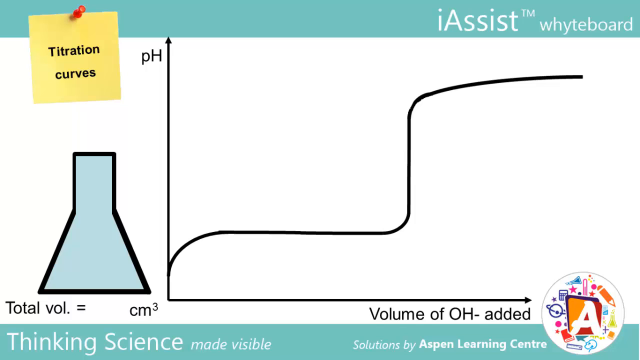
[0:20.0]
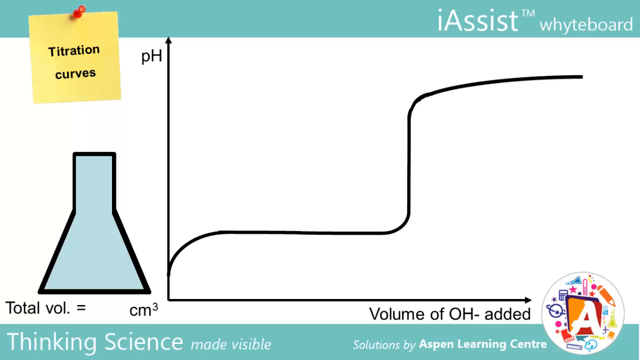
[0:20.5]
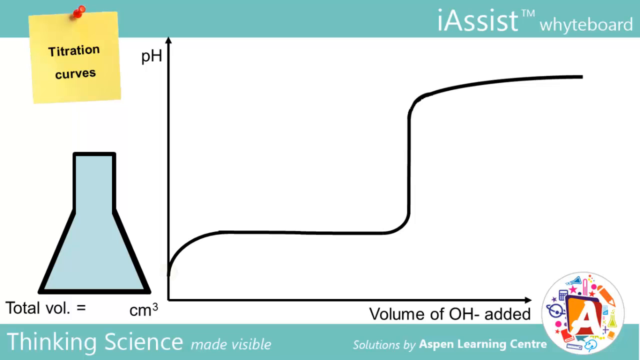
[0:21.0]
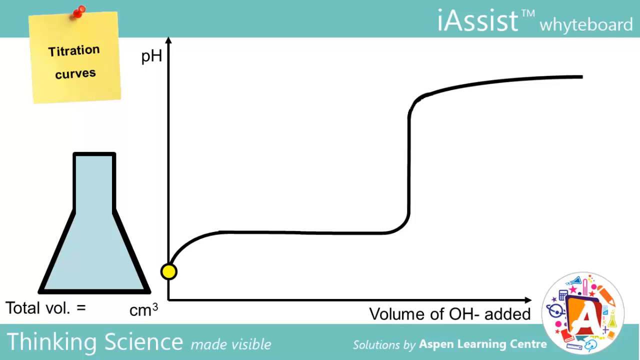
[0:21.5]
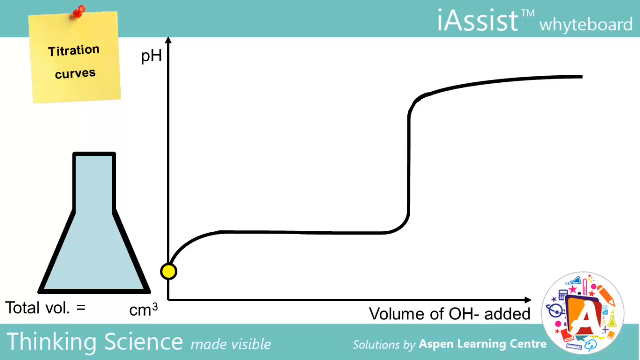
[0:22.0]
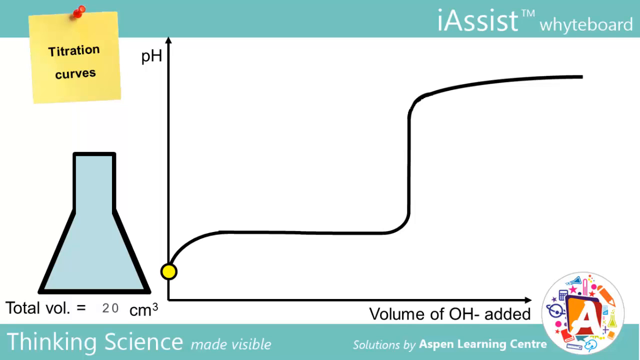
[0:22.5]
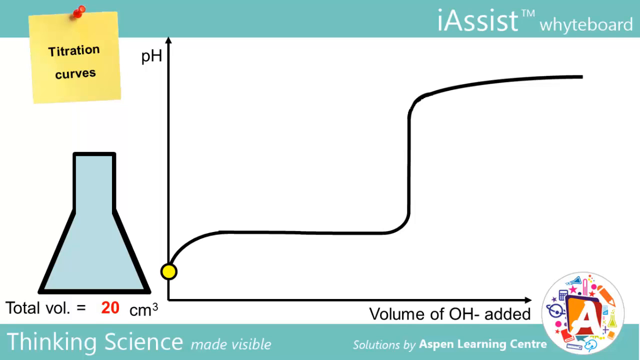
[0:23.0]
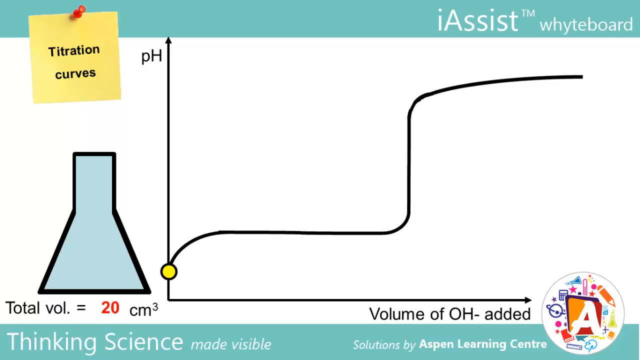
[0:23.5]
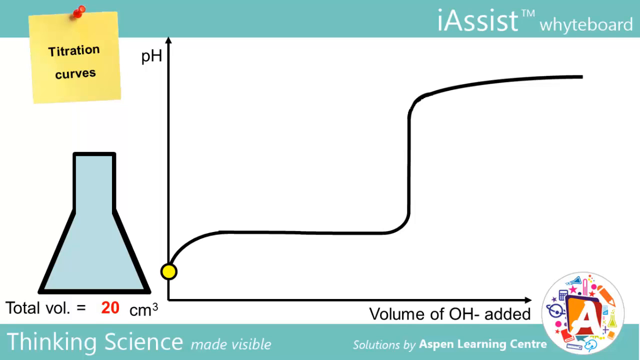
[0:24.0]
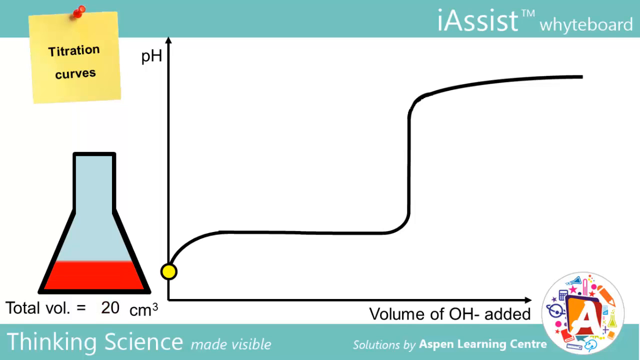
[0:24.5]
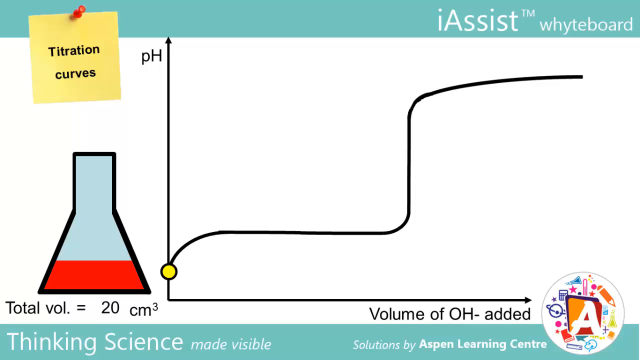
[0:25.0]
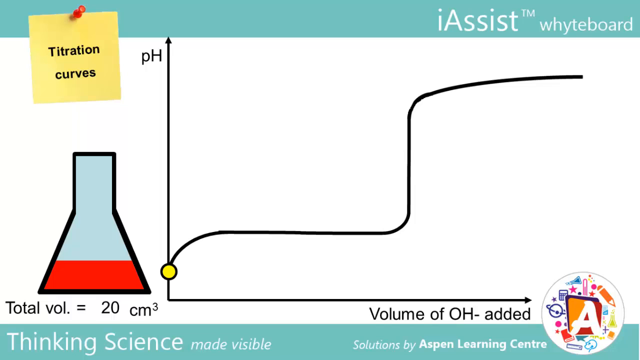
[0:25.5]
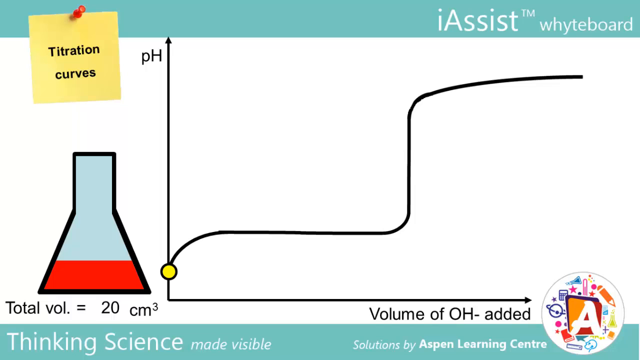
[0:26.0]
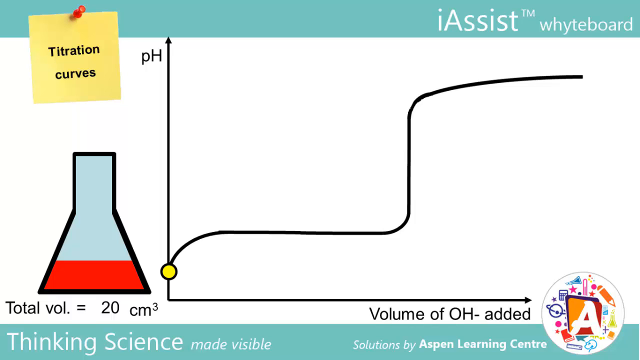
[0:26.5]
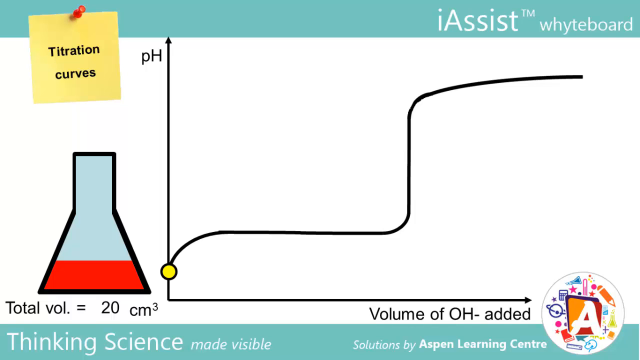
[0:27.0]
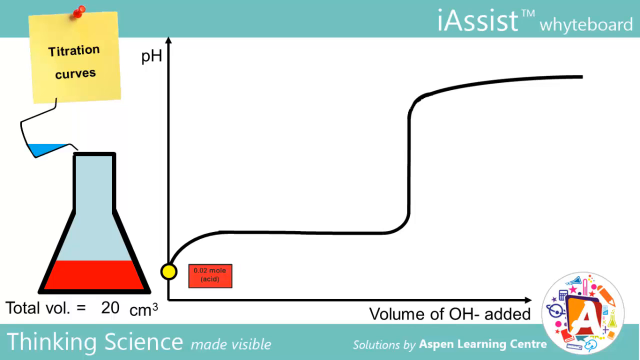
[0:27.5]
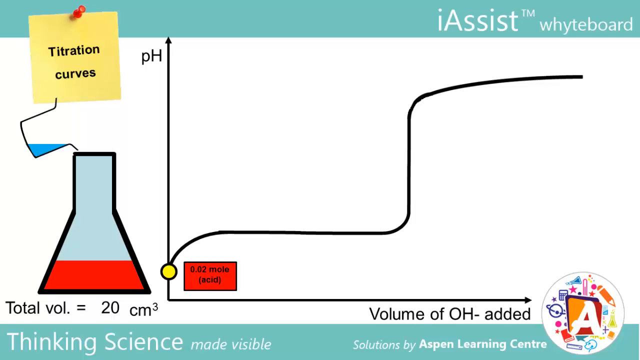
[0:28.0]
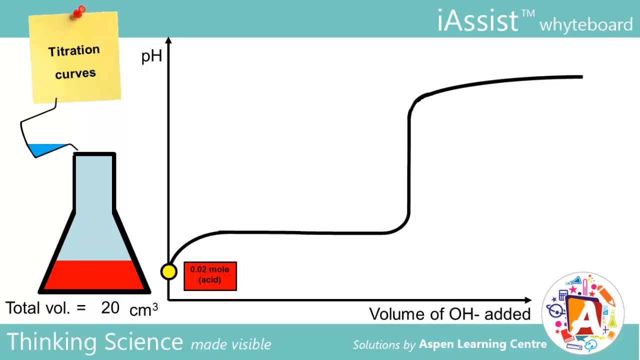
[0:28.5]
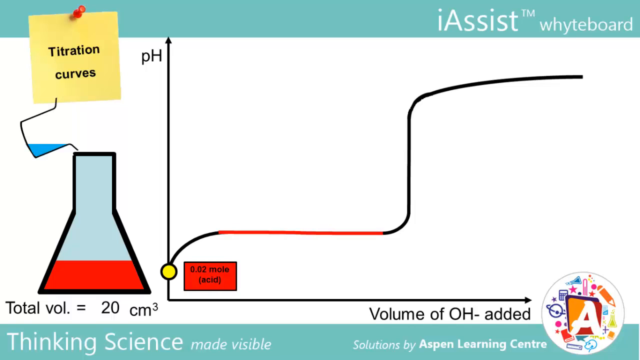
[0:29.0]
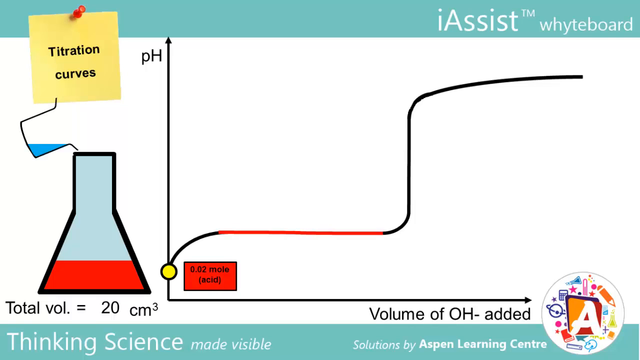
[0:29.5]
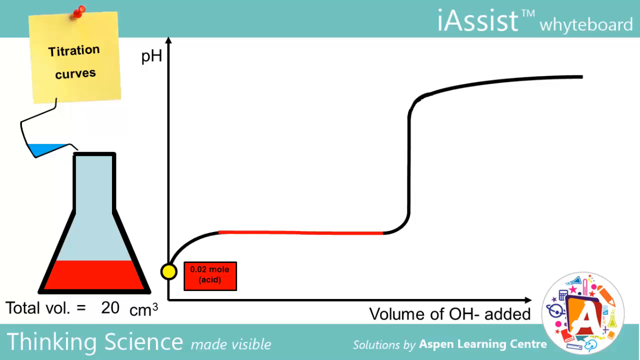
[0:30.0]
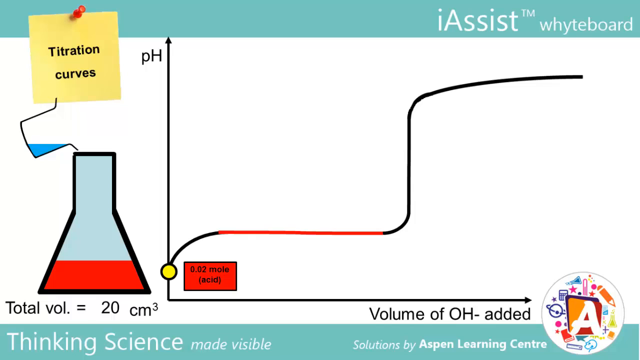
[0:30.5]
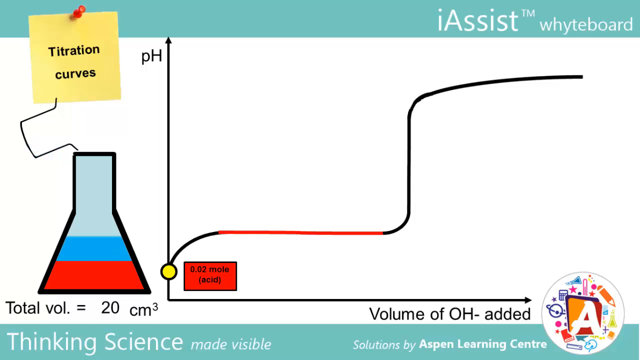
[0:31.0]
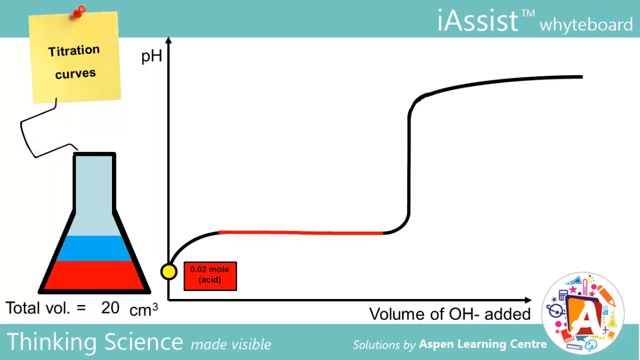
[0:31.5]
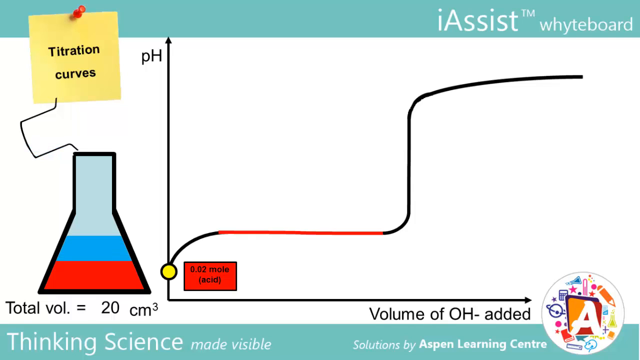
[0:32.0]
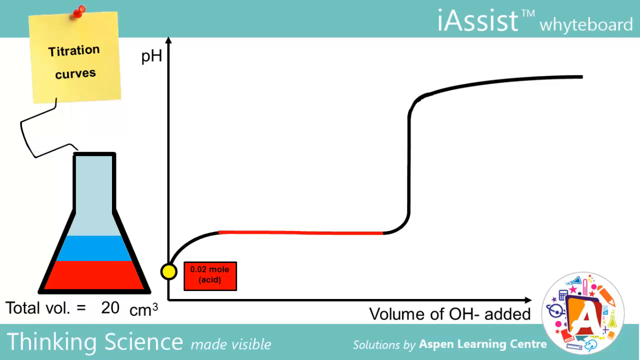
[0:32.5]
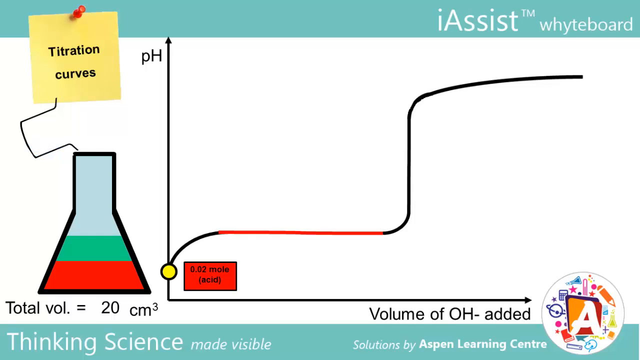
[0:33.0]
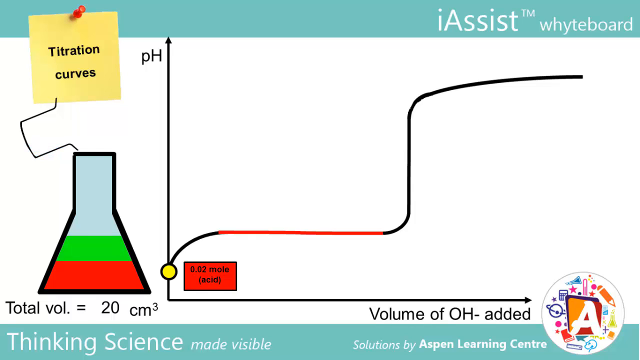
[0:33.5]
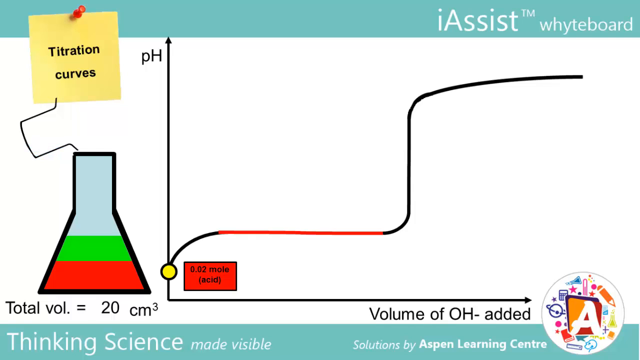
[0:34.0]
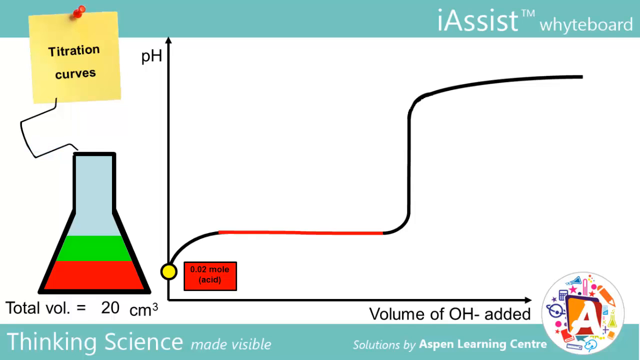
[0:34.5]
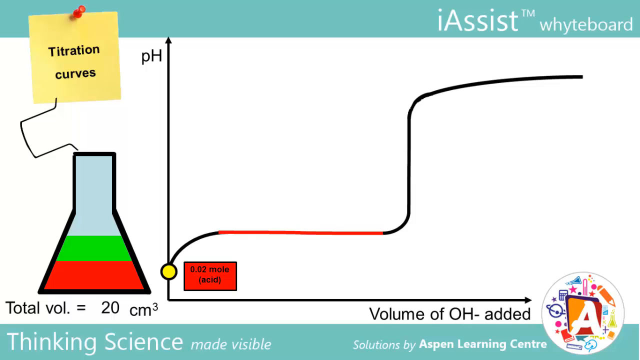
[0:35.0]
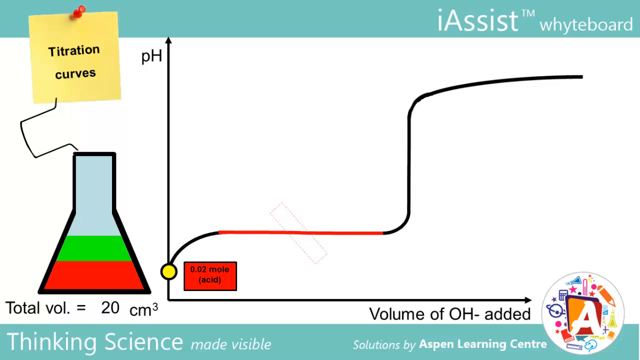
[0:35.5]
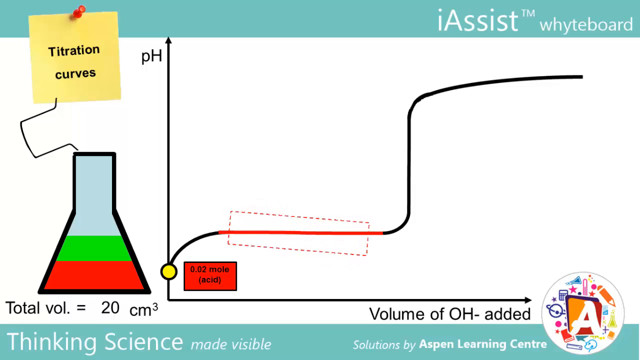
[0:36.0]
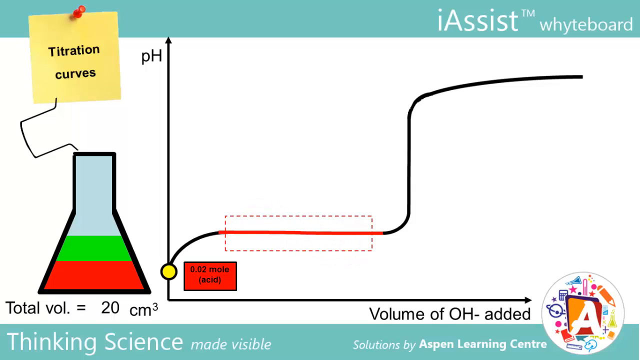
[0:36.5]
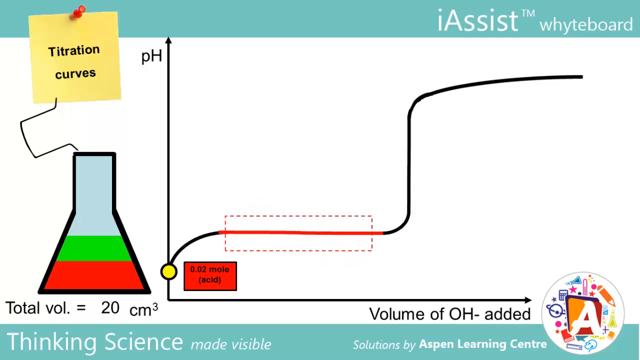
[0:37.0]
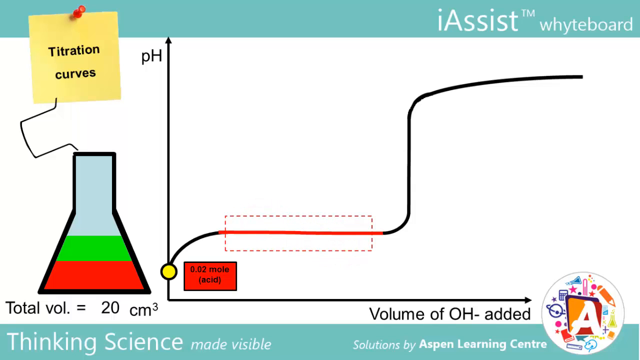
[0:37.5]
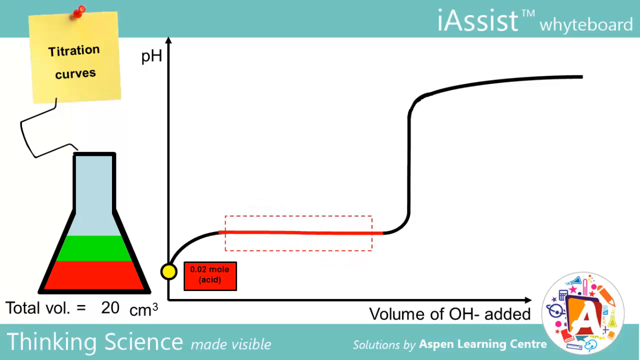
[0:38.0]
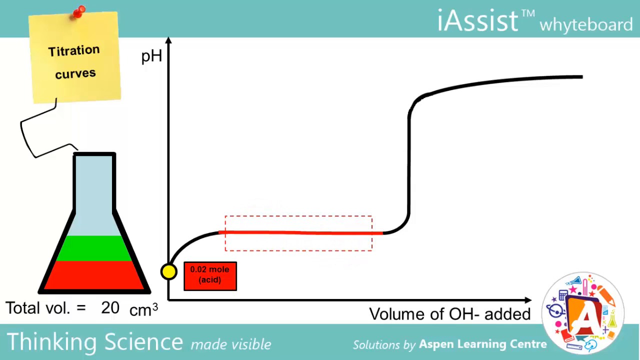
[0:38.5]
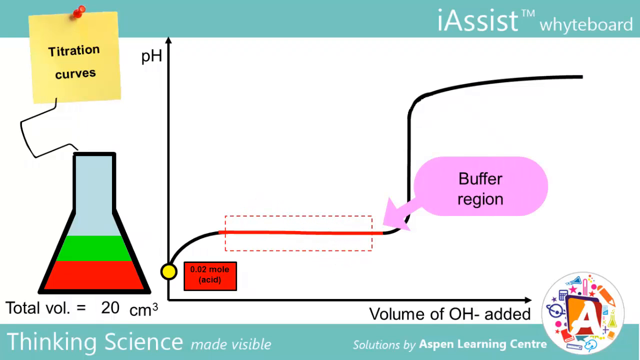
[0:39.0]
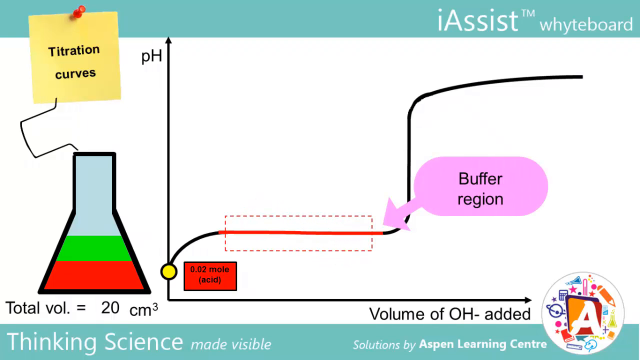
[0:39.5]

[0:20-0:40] A graphic with a Y axis and an X axis is shown. Across the upper part of the frame is a blue or light blue banner with white text in the upper right corner, and in the upper left corner there is a yellow post-it with two lines of black text. A yellow circle appears on the Y axis. Then the blue container represented on the left side of the screen partially fills with what looks like a red liquid. Next, the image of a container holding a blue liquid appears in the upper left corner. A small red rectangle with a black border appears next to the yellow circle, with black text inside it. Next to the red bar inside the schematic representation of the container, a blue bar of equal height is added.